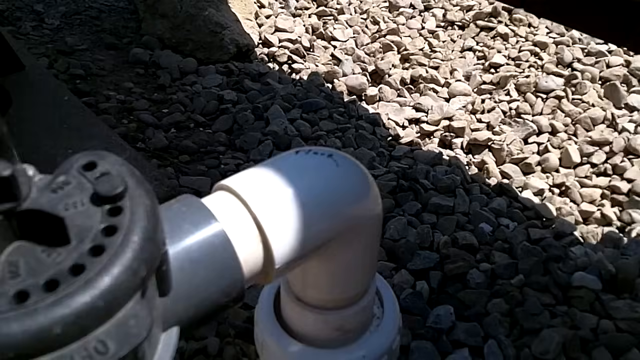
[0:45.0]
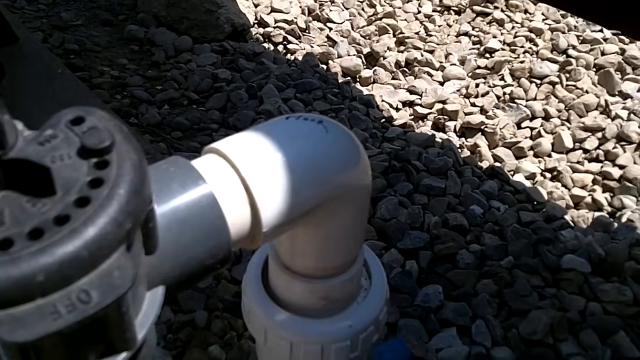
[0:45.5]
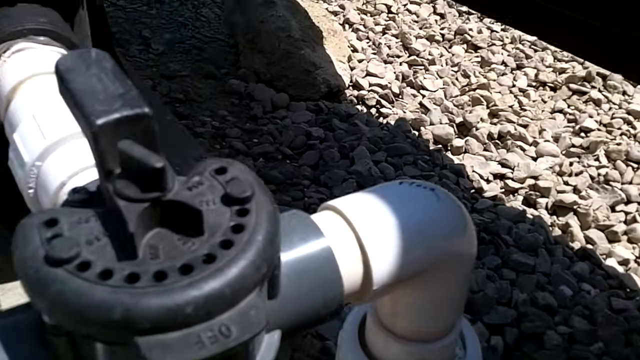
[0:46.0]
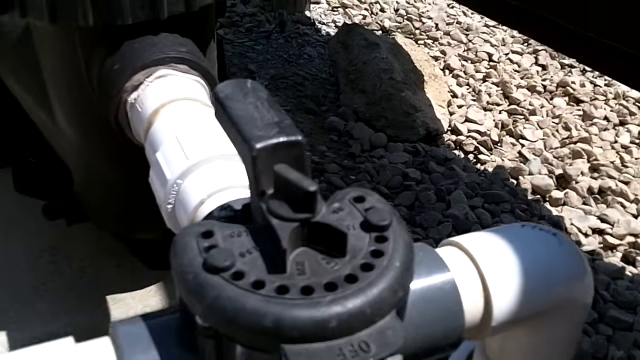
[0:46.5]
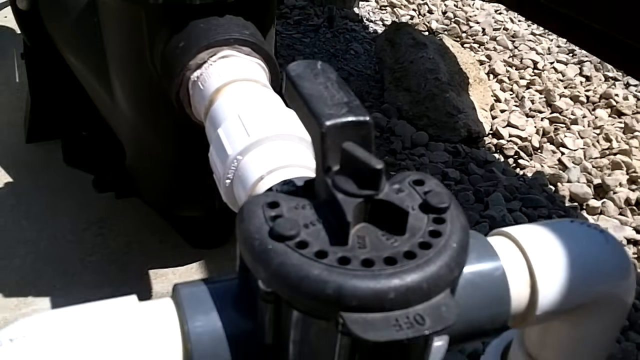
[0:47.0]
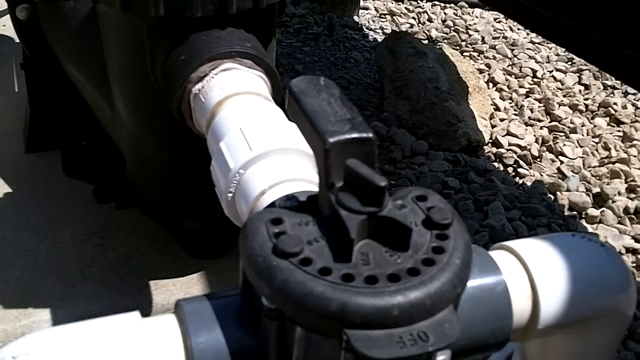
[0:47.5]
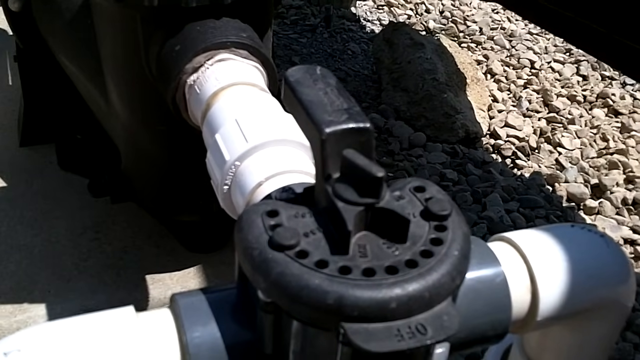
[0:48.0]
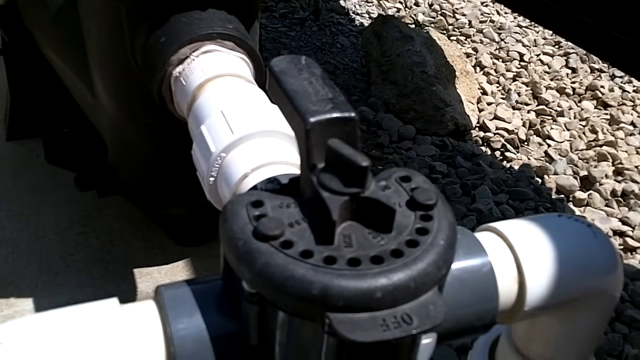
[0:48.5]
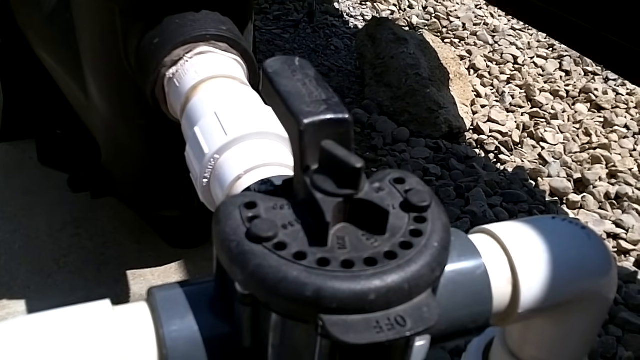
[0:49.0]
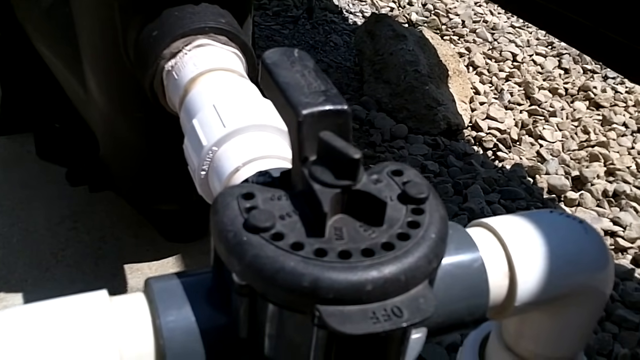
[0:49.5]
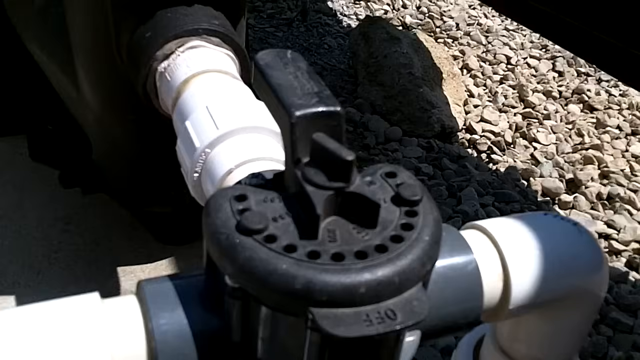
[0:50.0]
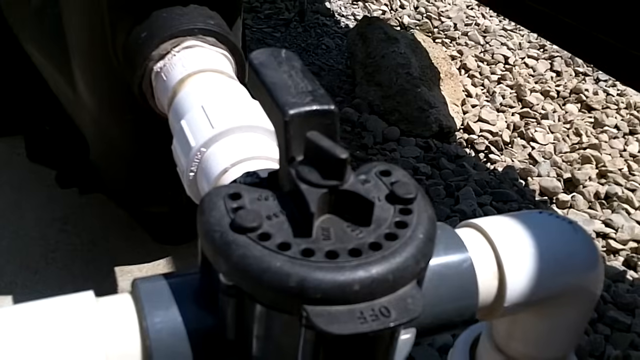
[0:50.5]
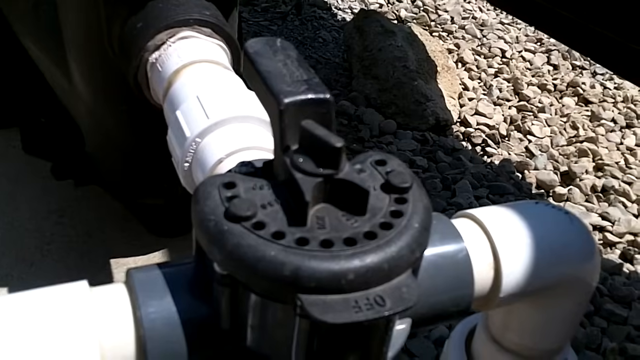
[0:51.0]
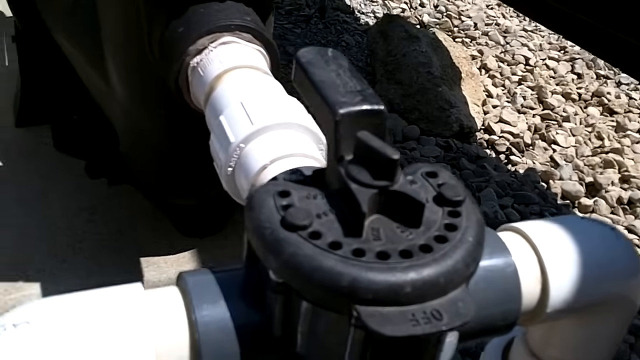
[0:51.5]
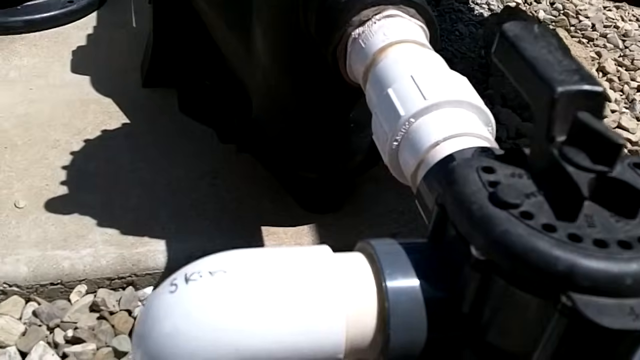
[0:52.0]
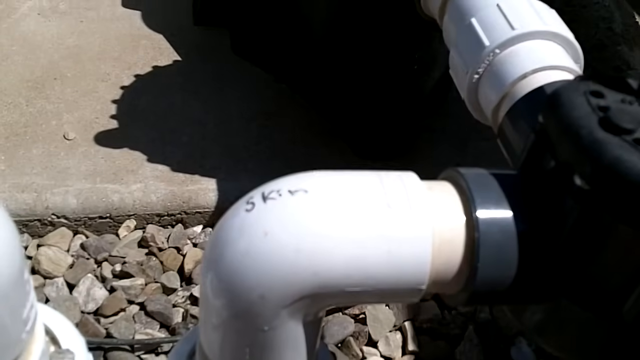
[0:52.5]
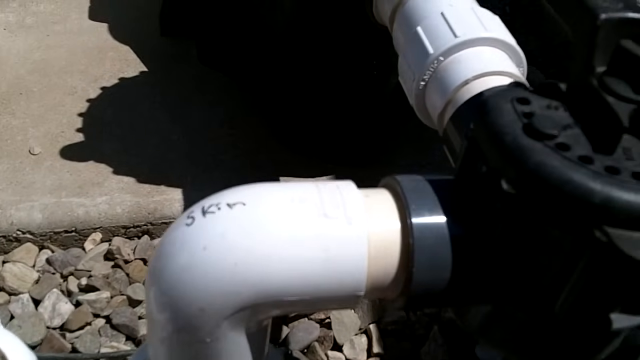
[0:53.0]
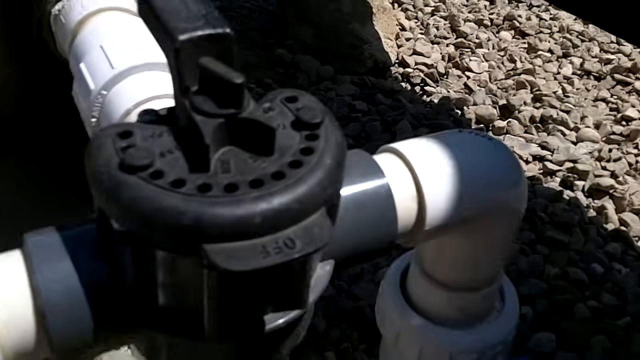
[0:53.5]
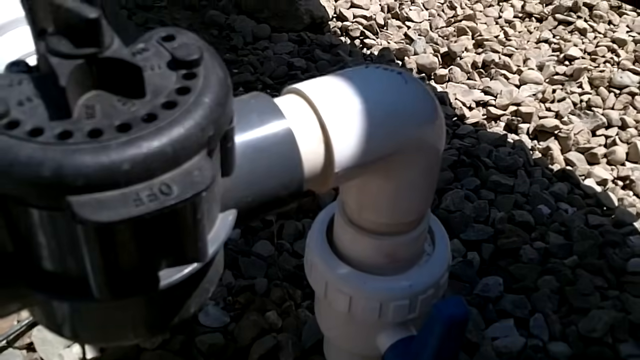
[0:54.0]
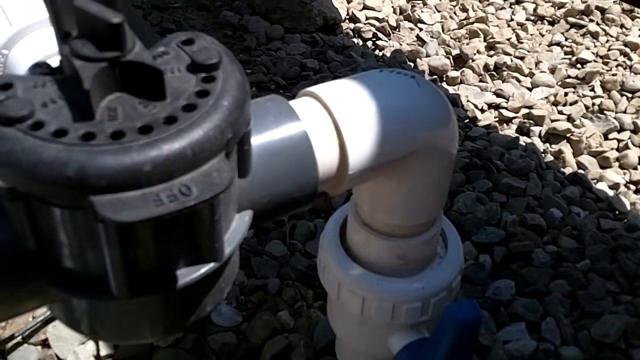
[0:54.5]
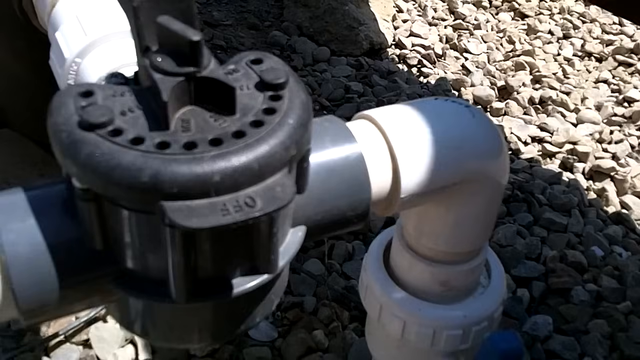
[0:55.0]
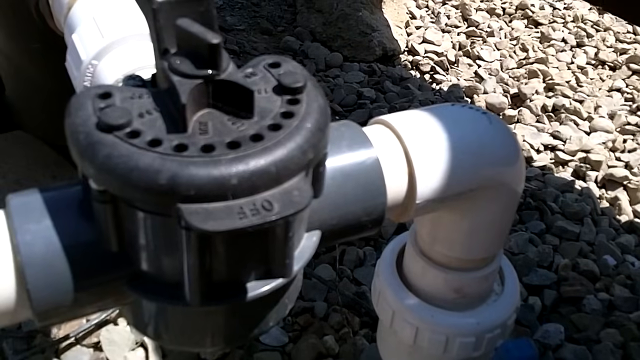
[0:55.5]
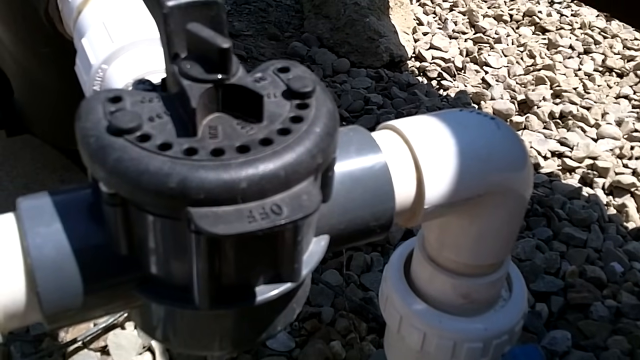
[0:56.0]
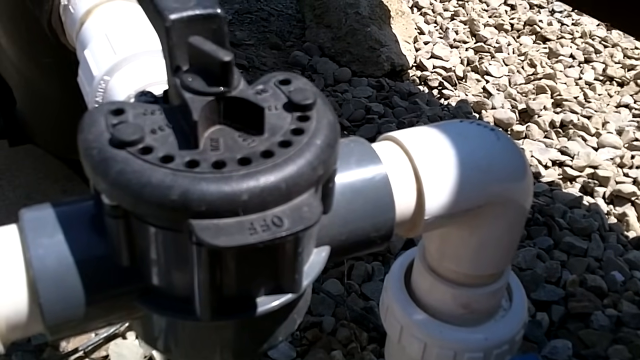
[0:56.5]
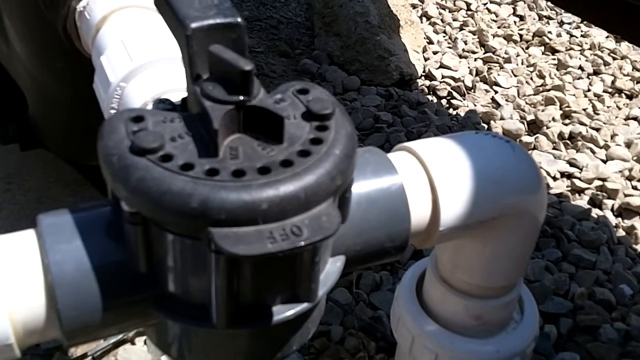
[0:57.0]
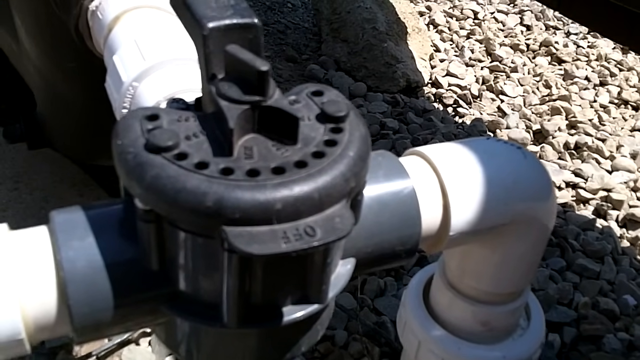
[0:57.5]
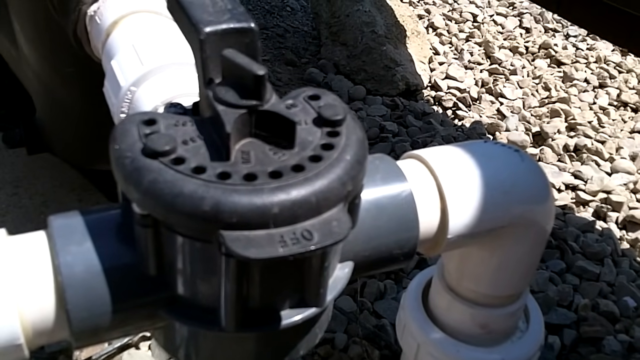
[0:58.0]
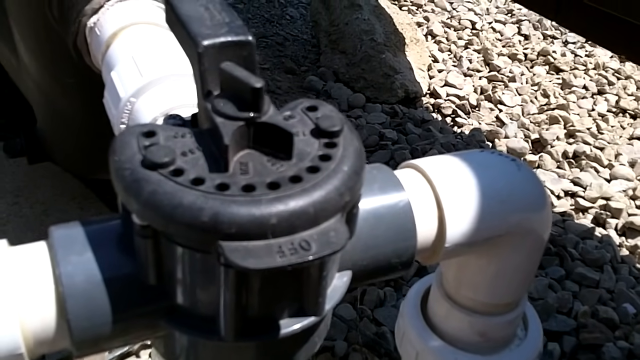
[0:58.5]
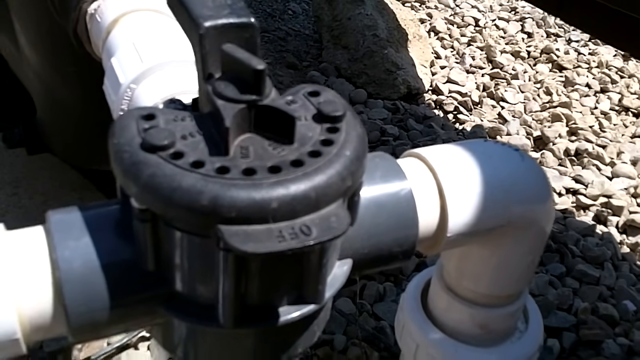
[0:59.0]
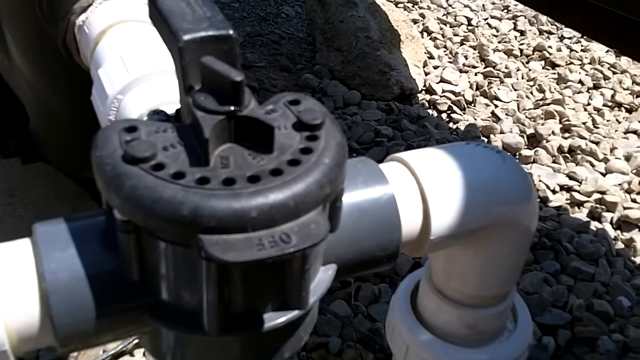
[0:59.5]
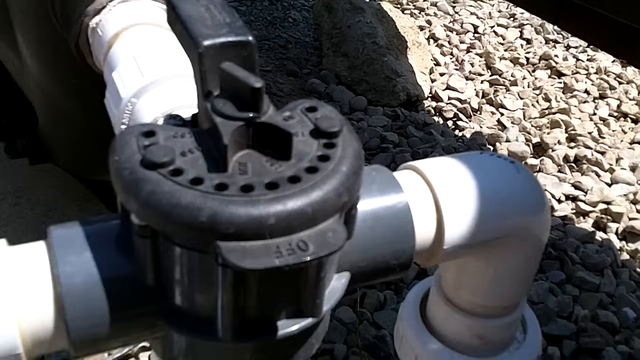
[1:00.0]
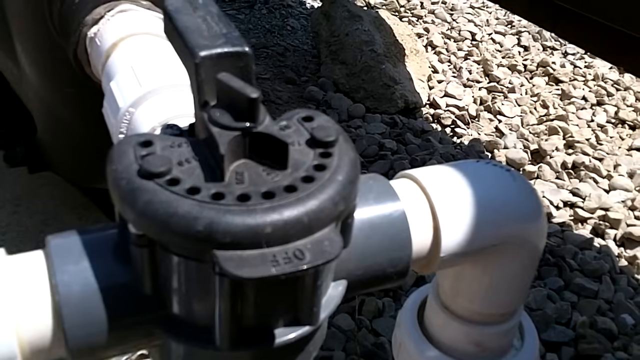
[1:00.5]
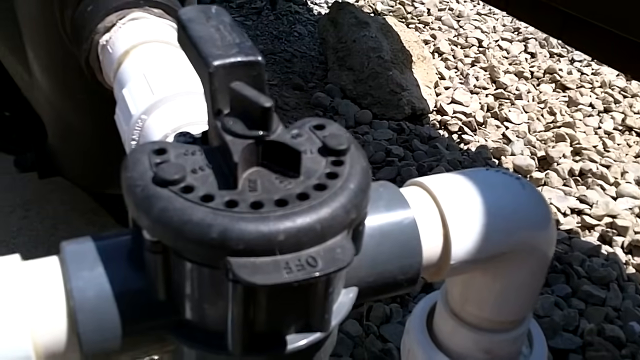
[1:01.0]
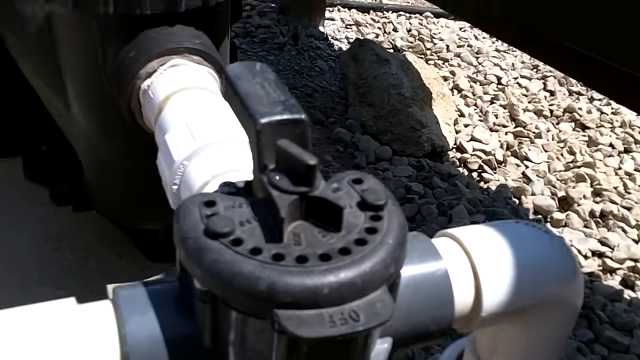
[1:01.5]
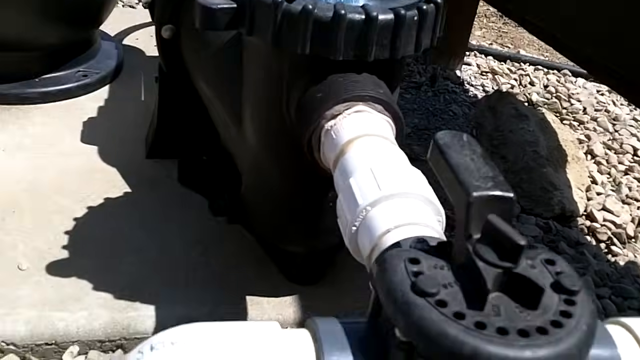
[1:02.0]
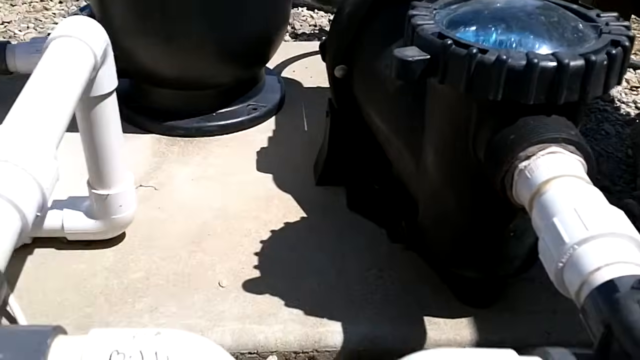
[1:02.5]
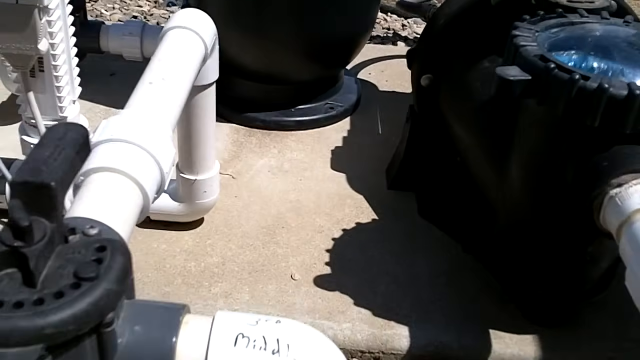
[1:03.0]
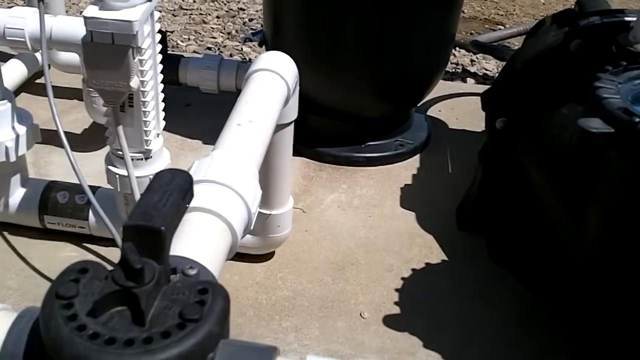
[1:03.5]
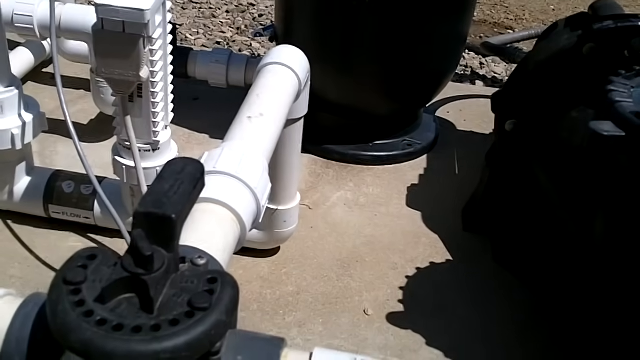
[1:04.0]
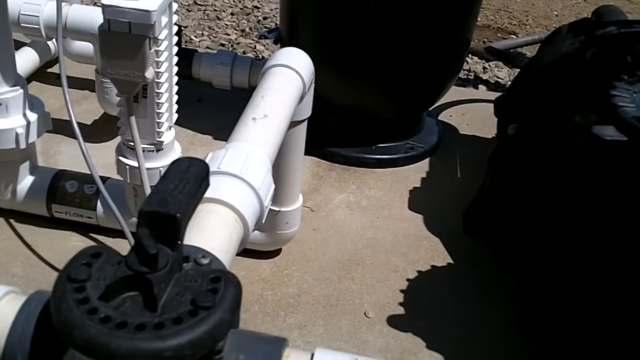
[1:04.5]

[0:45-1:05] A close-up shows one of the black levers, a lever that turns clockwise or counterclockwise and has an off position; writing on the lever says "off". It currently looks like it is engaged. The view also shows some of the white tubing on the cement portion. Writing on part of the tubing on the left is apparently in blue lettering, but the focus is mostly on the black portion and the lever on top, which almost looks like a parking brake situated on top of the black piece. A lot of circles form a semi-circle around it, kind of etched into the design. This part is heavily shaded, with more rocks in light and shade, the cement, and other parts of the controls.